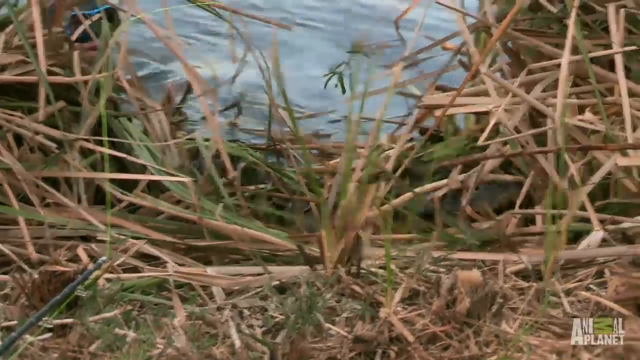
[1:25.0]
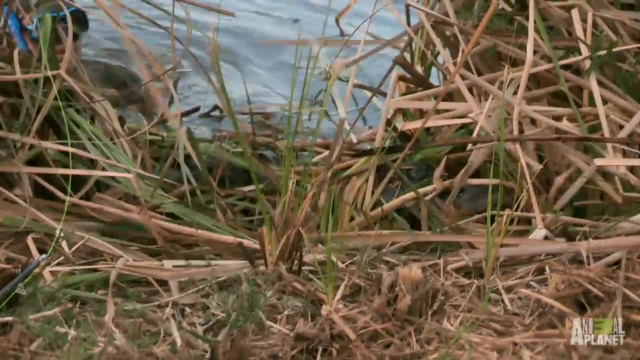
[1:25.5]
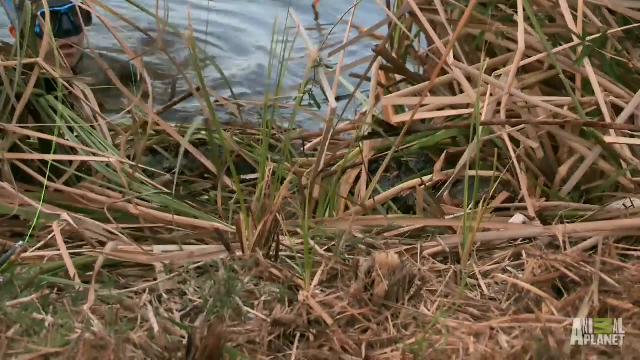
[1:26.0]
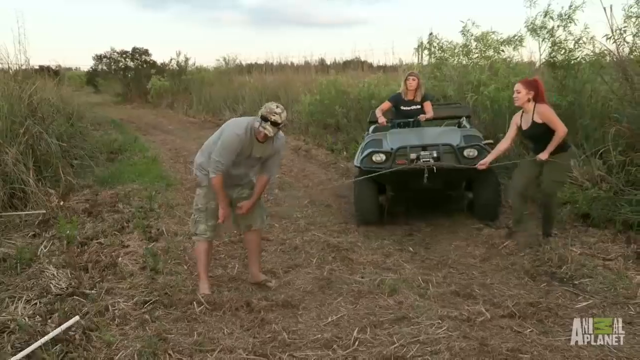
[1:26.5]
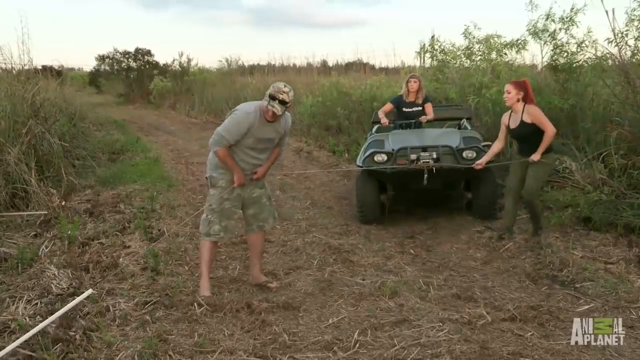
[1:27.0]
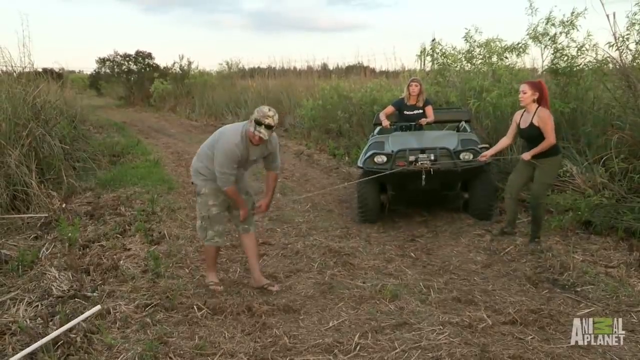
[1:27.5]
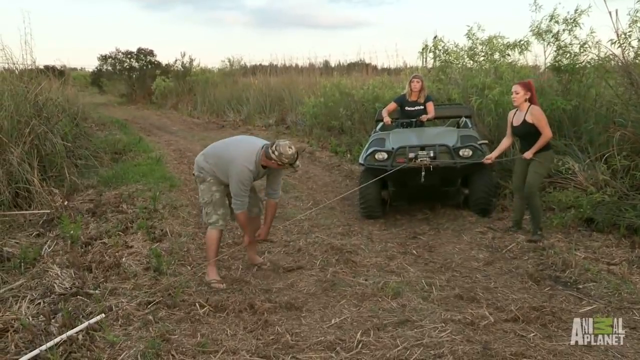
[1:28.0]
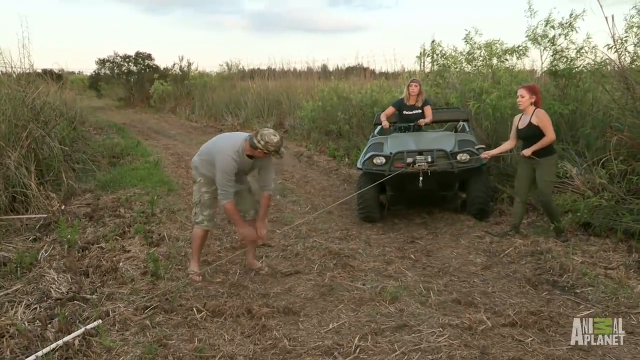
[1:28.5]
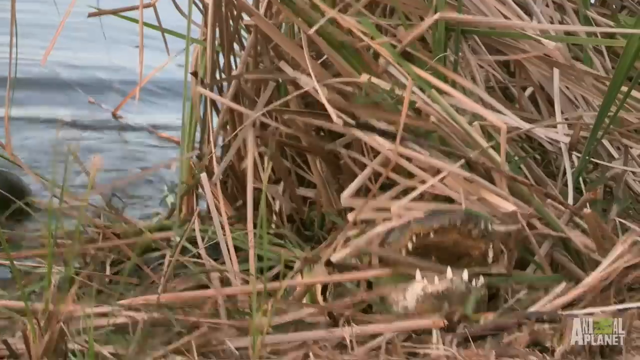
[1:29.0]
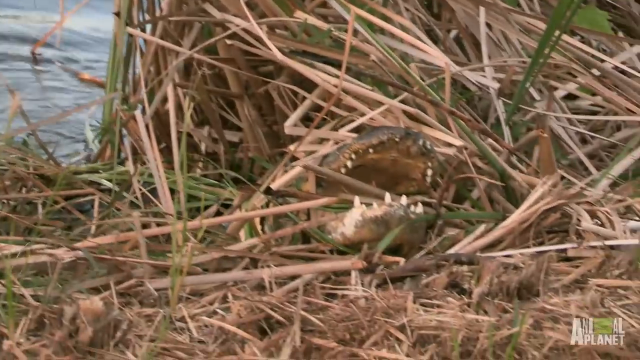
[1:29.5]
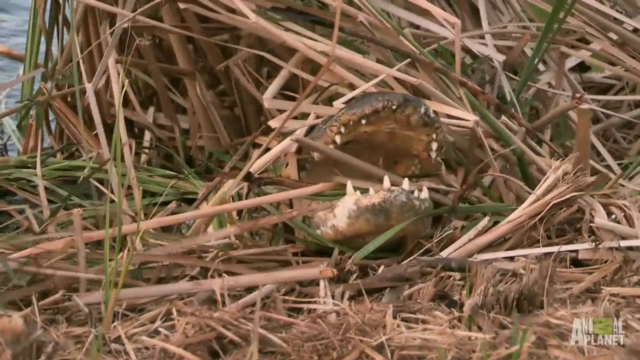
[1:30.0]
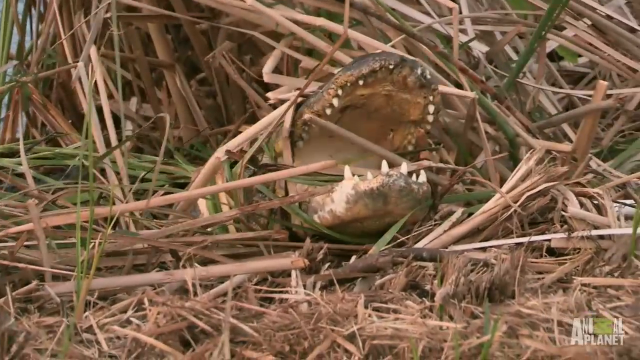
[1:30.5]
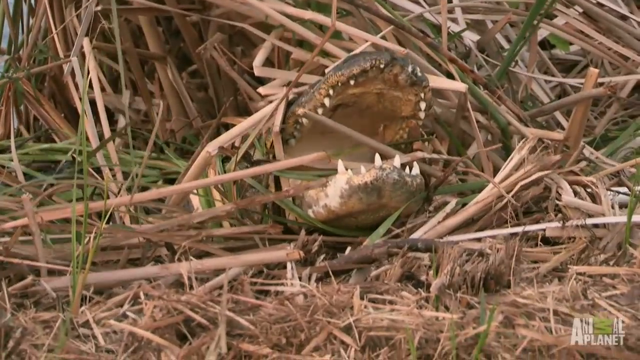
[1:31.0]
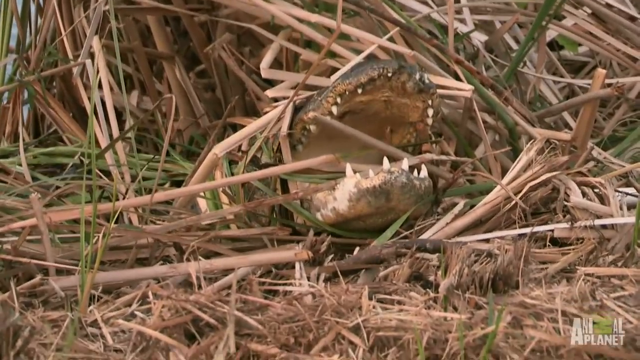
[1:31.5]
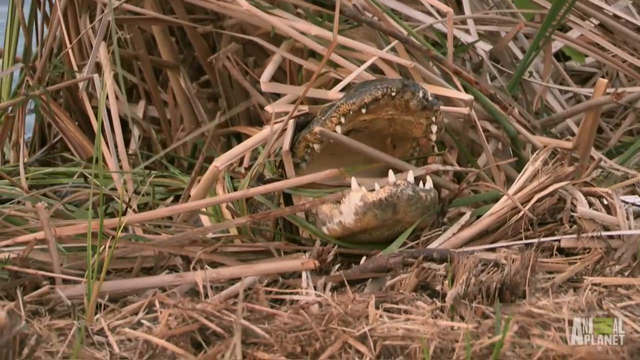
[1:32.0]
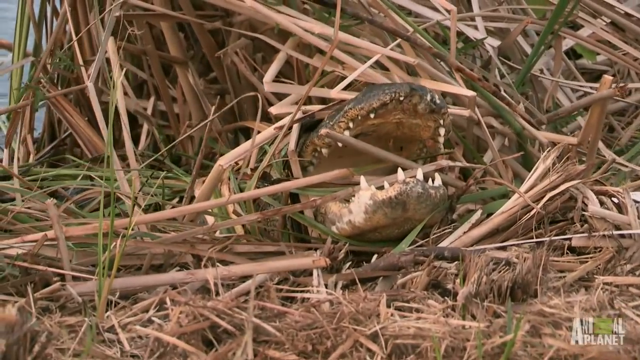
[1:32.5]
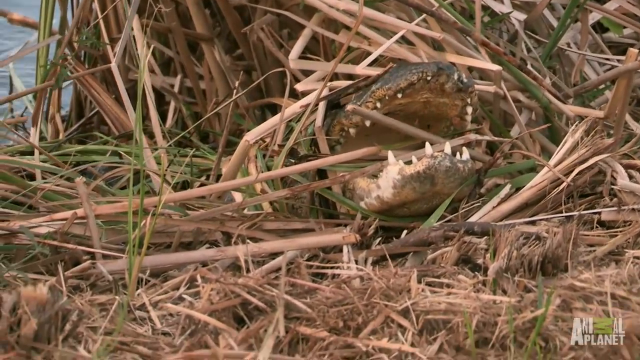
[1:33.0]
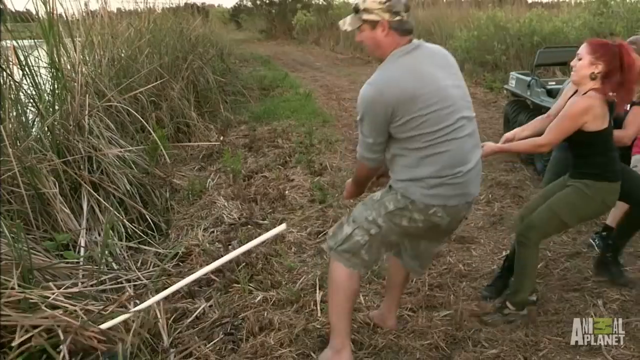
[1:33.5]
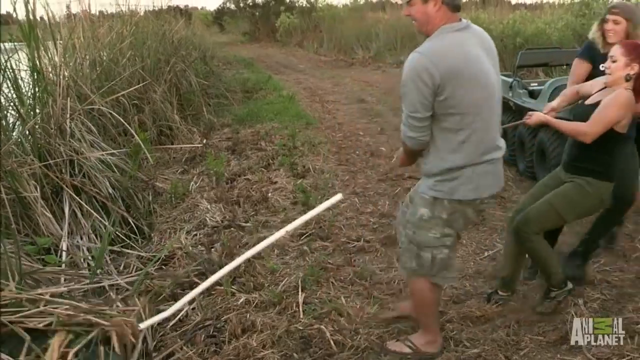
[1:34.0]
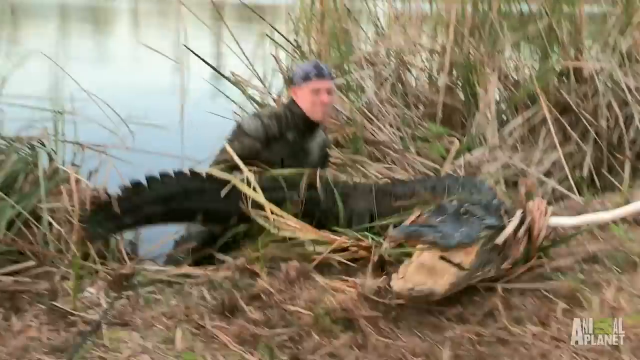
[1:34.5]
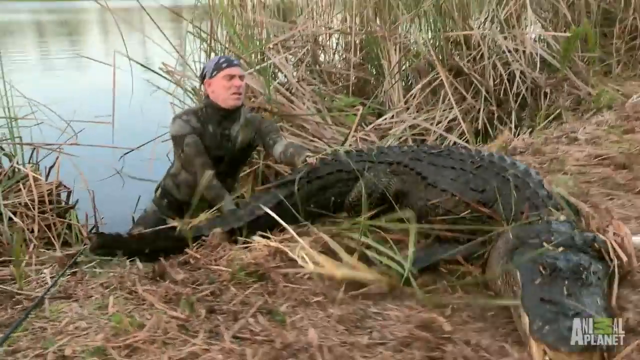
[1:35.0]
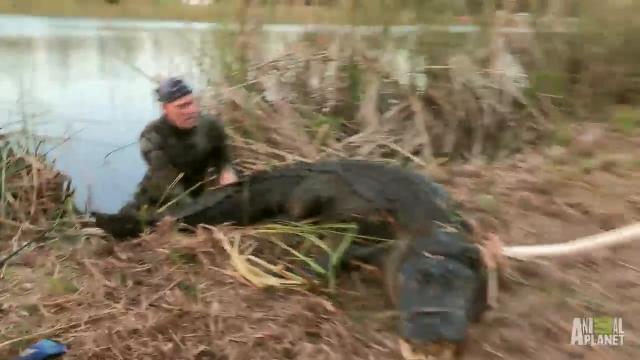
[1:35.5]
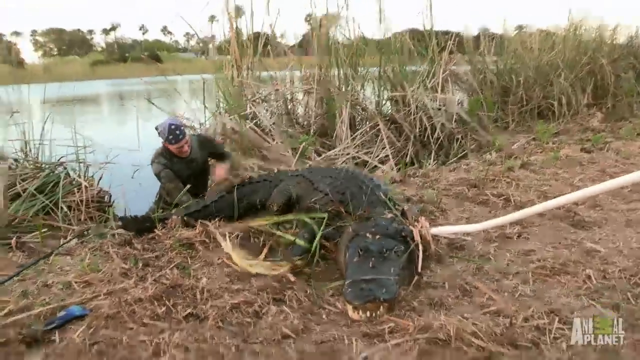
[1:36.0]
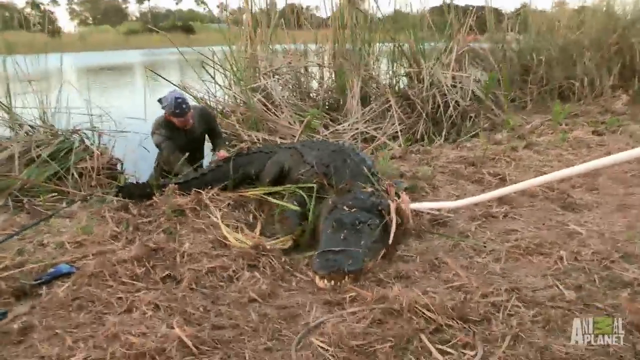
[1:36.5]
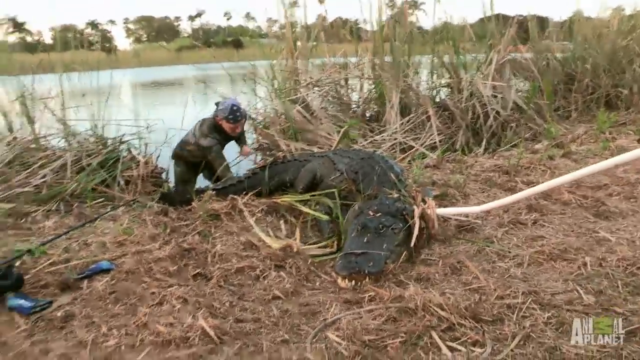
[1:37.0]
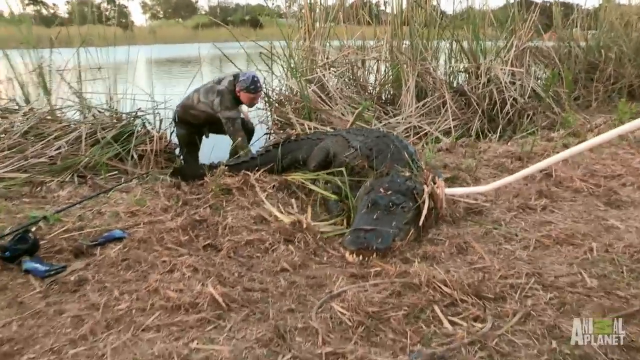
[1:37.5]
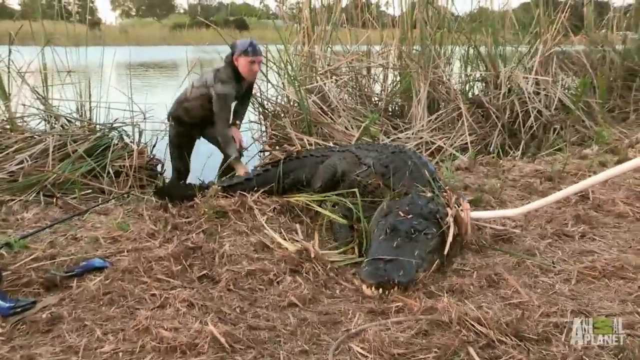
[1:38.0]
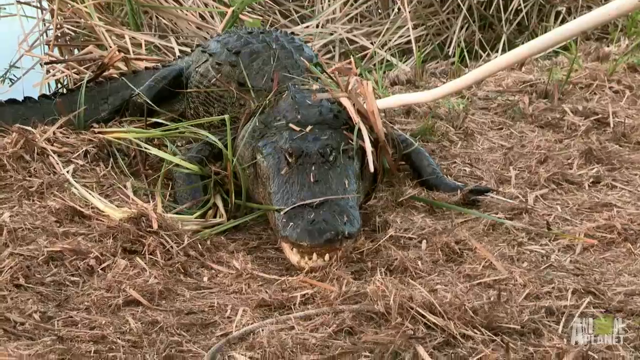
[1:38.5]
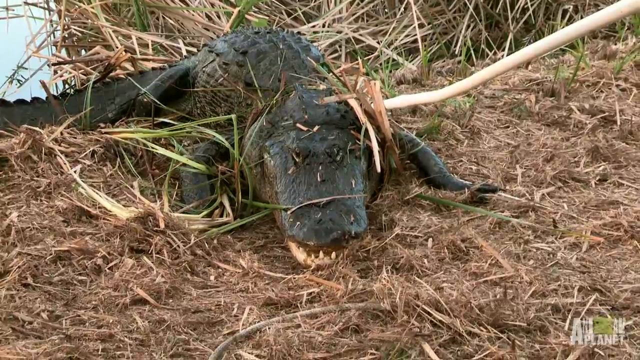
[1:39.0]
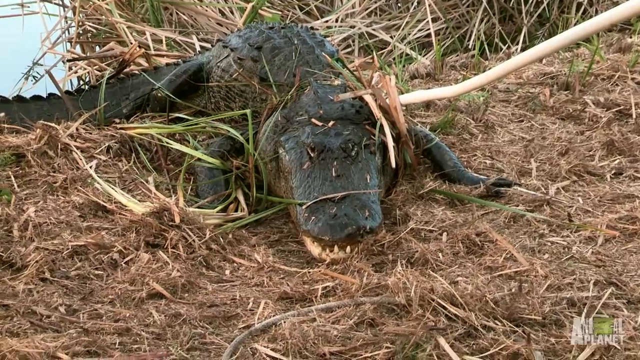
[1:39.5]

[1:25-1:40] The alligator seems to be slowly pulled through the reeds. The camera switches to the woman on the ATV driving backwards with the rope tied to the front of it. The other woman stands pulling at the rope, angling it right in front of the ATV, and off to the left, slightly further from the ATV, the man in the gray t-shirt also pulls at the rope as the ATV slowly backs up. The camera switches back to the alligator, its mouth gaping open to show sharp teeth; it appears agitated. Three people pull the rope backwards, forcing what looks like a very large alligator out of the water, over the reeds and onto the land, while the man in the wetsuit is toward the back of the alligator, securing its tail and the back of its body.